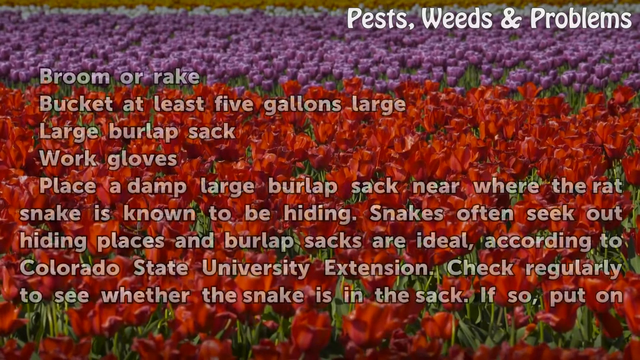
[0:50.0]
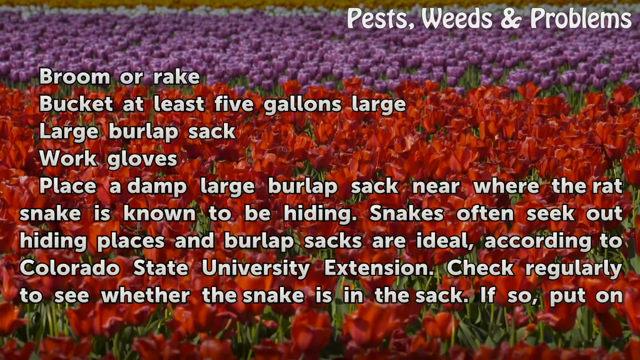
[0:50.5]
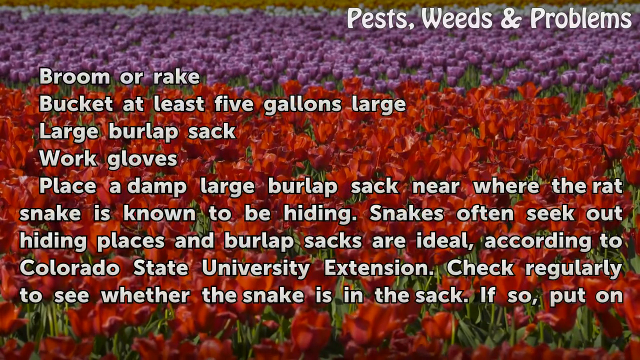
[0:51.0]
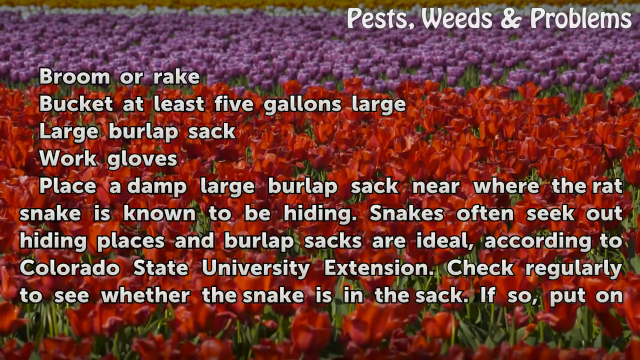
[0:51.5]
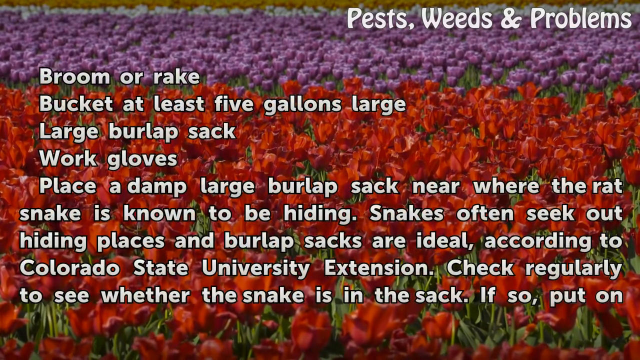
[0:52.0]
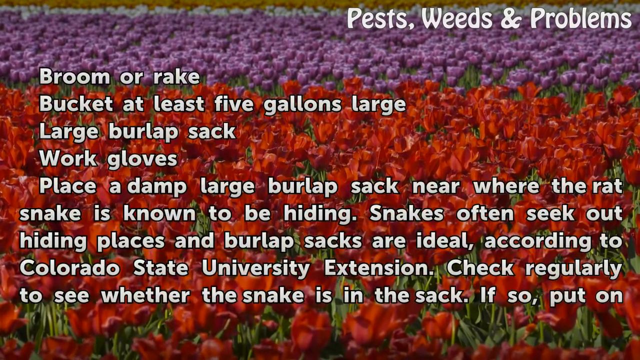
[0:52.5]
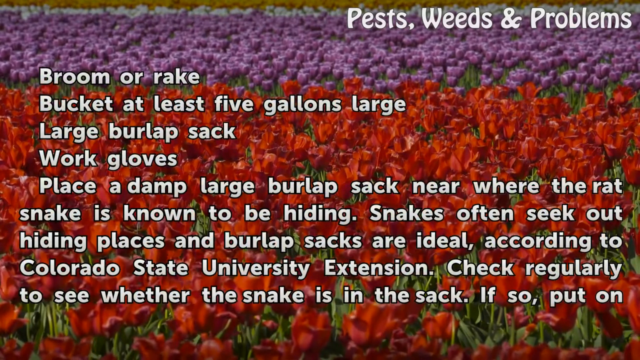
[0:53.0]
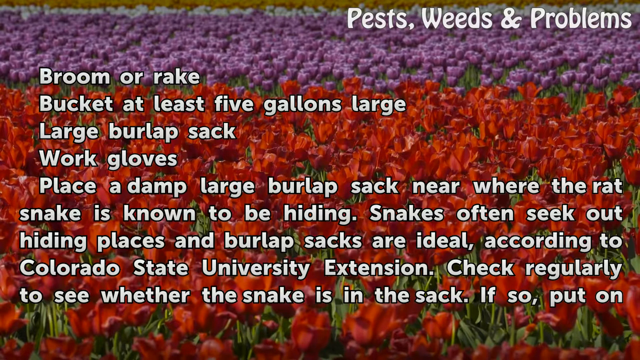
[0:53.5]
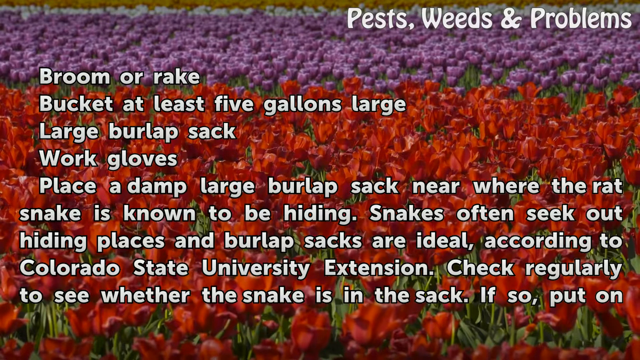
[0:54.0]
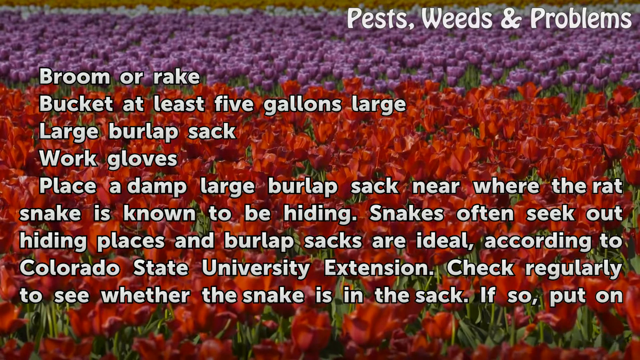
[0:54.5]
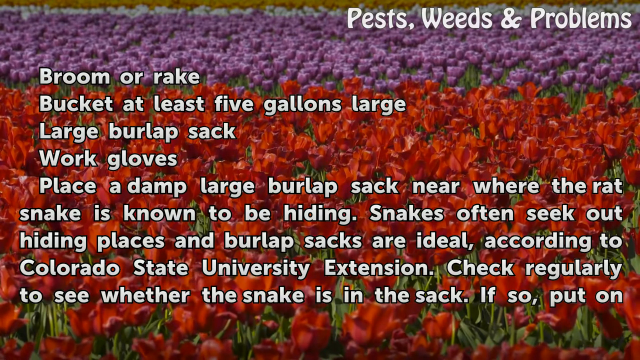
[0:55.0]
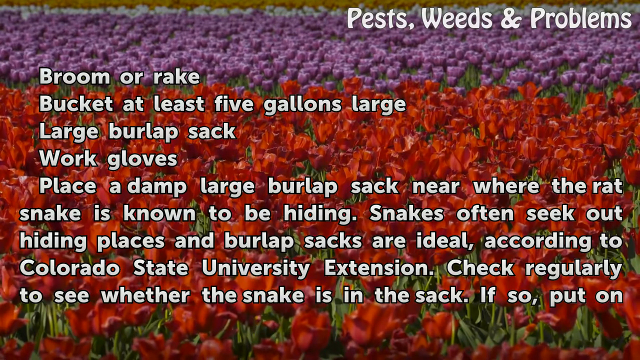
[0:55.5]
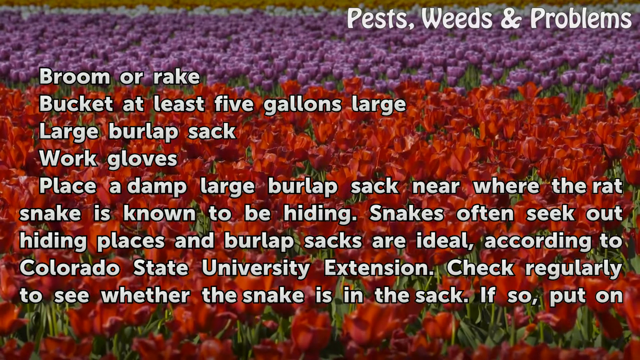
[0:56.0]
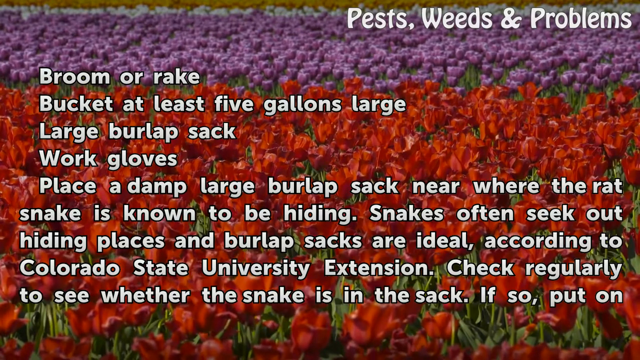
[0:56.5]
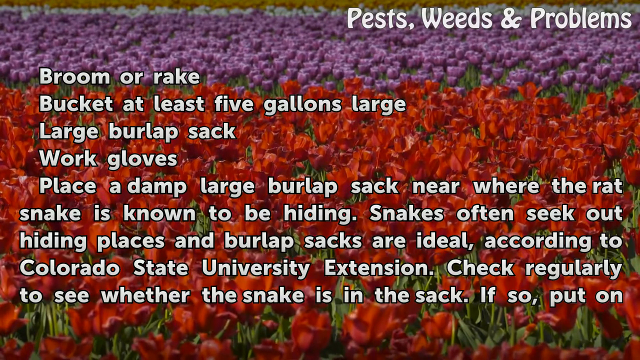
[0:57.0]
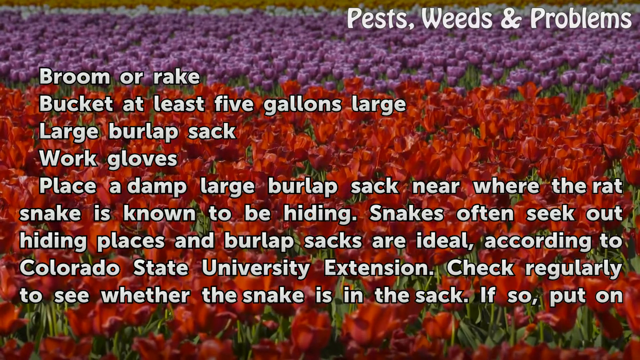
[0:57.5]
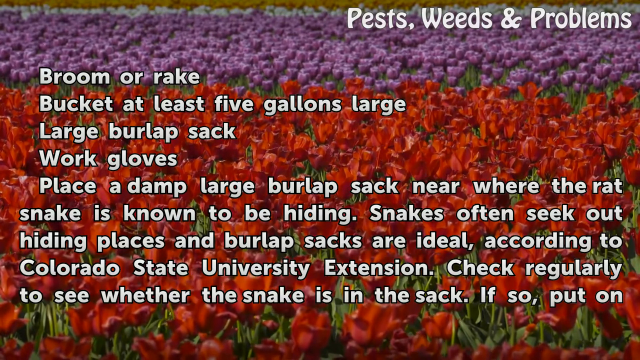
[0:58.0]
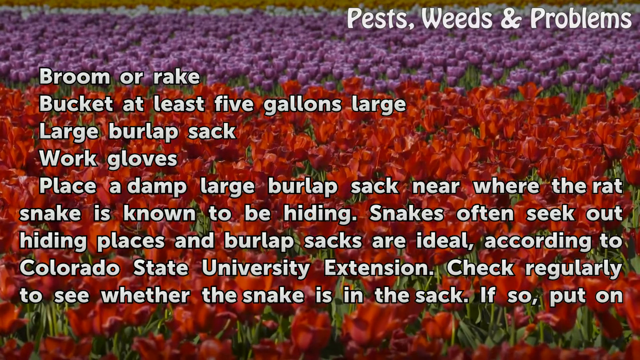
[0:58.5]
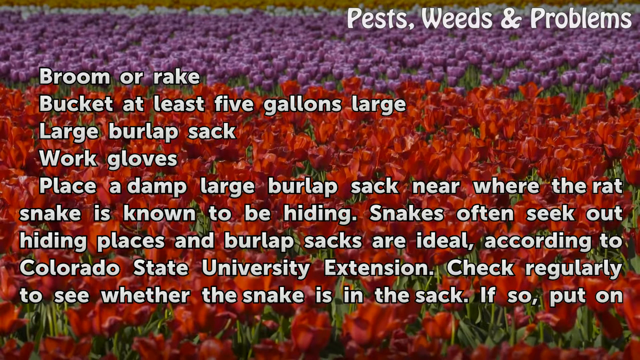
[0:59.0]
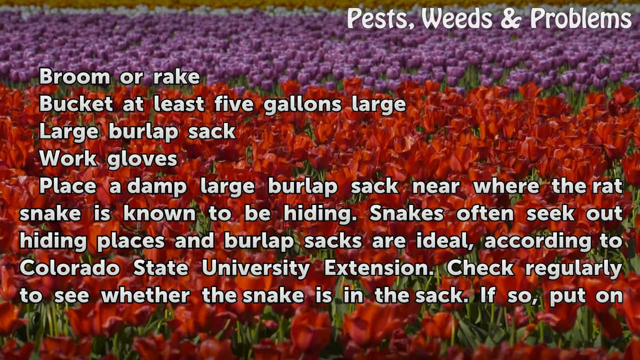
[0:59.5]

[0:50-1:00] White lettering at the top right says "pest weeds and problems." White lettering in the middle reads "broom or rake. Bucket at least five gallons large. Large burlap sack. Work gloves. Place a damp large burlap sack near where the rat snake is known to be hiding. Snakes often seek out hiding places and burlap sacks are ideal according to Colorado State University Extension. Check regularly to see whether the snake is in the sack. If so, put on." In the background are orange flowers in the far distance, then a row of white and a row of purple, with green stems visible underneath and a last row of red flowers all bunched together.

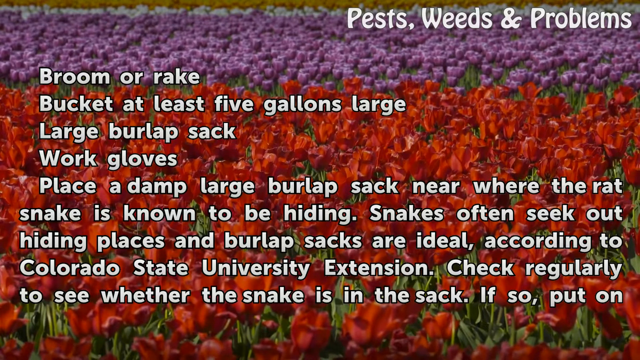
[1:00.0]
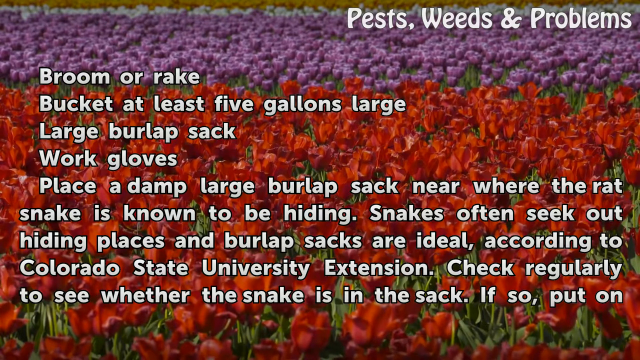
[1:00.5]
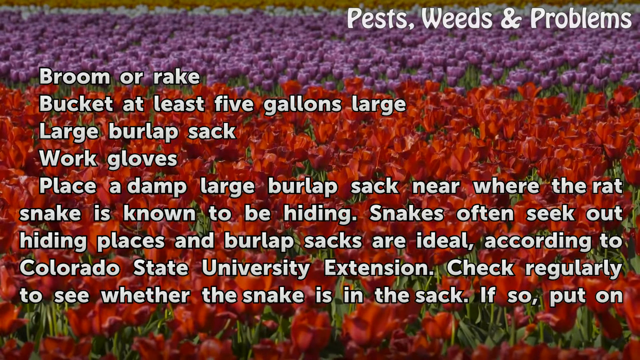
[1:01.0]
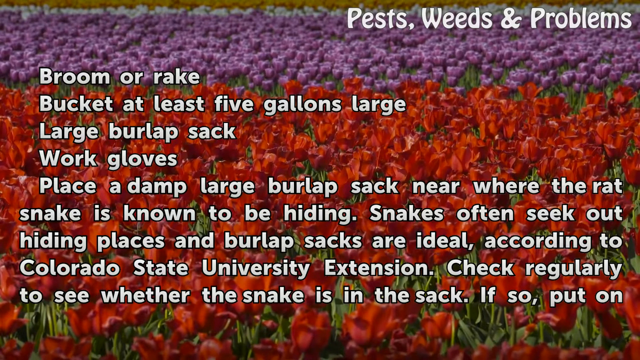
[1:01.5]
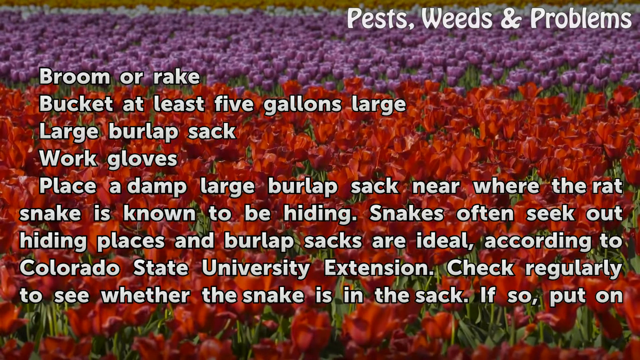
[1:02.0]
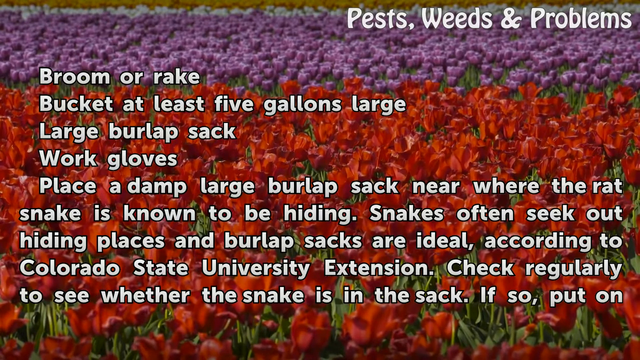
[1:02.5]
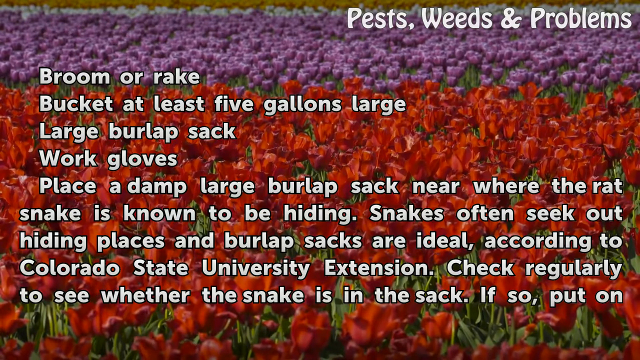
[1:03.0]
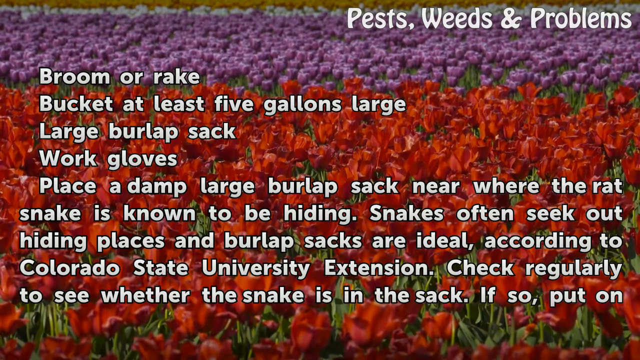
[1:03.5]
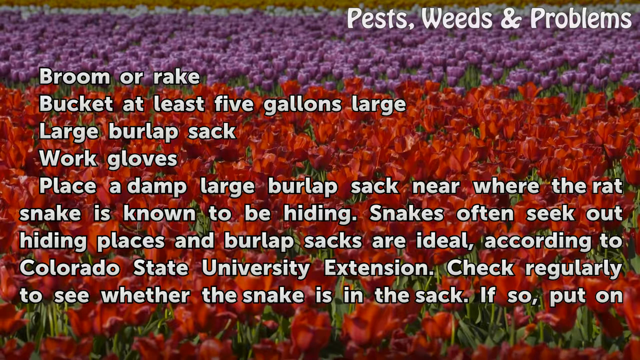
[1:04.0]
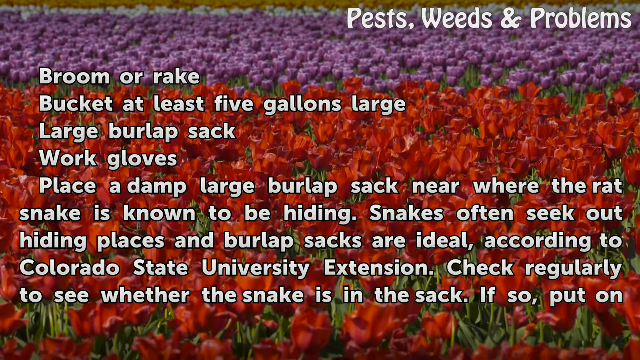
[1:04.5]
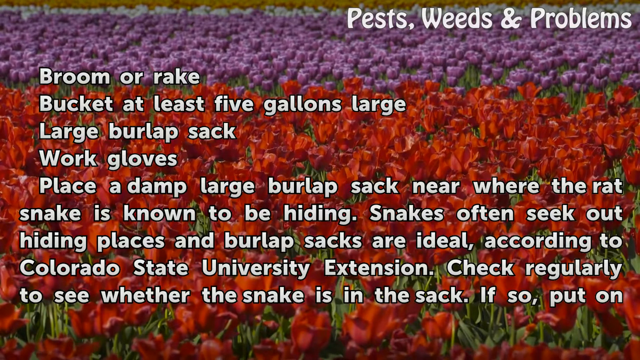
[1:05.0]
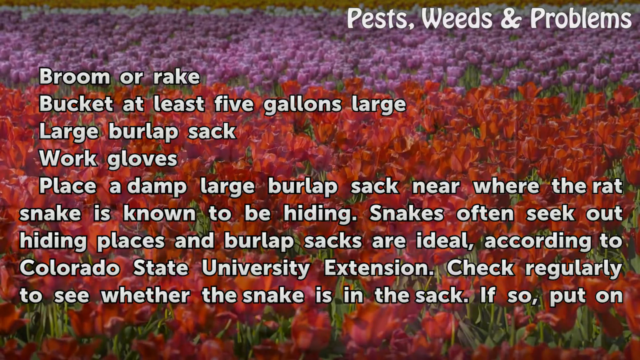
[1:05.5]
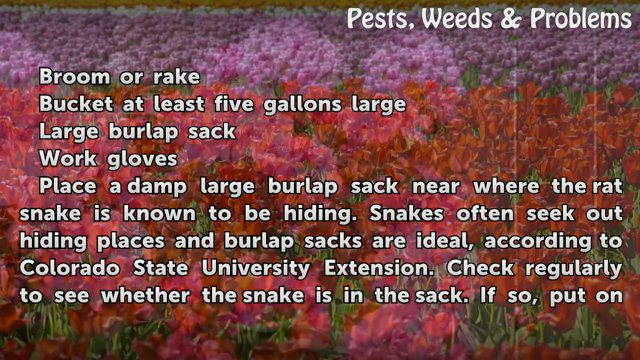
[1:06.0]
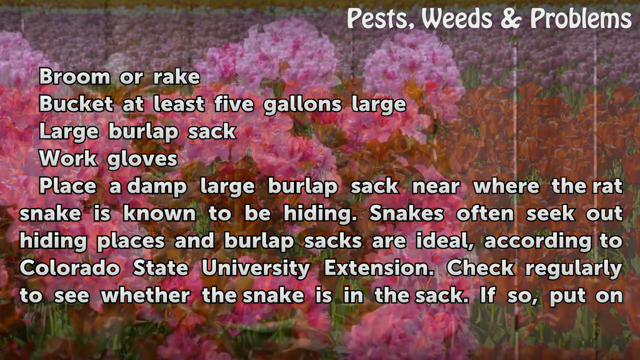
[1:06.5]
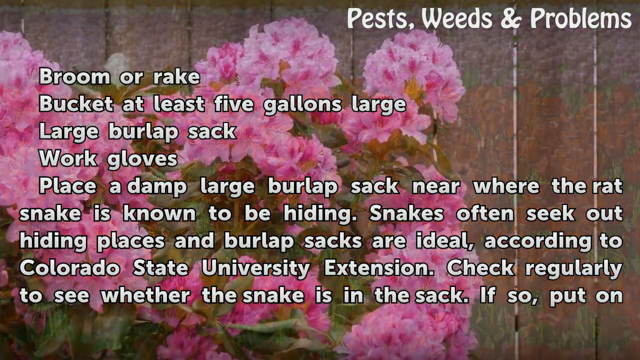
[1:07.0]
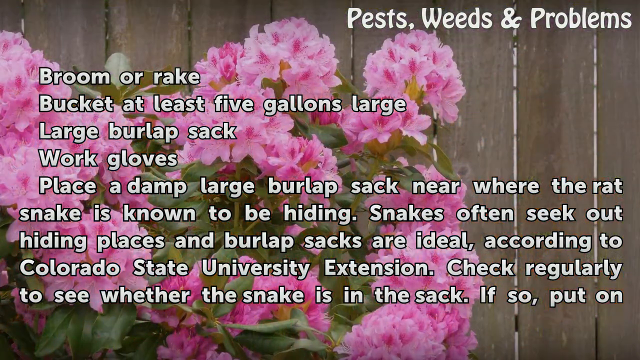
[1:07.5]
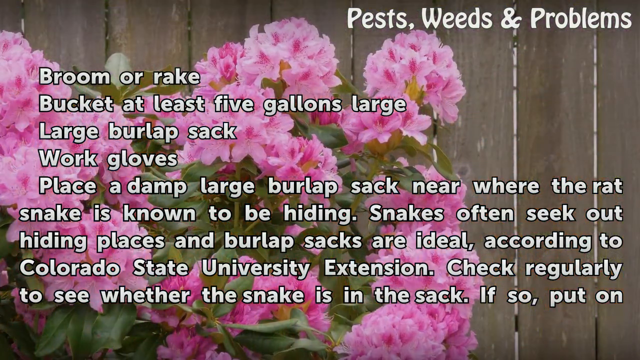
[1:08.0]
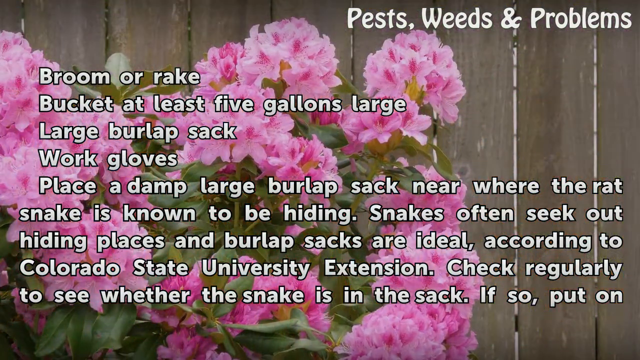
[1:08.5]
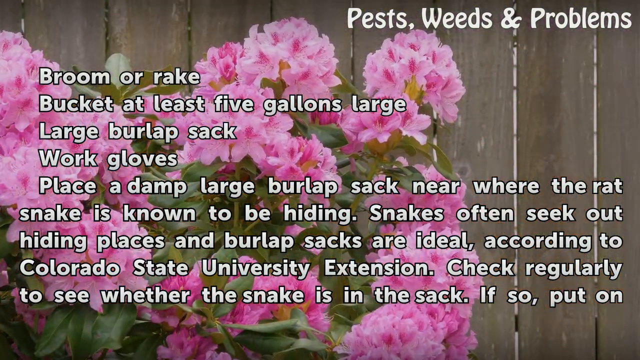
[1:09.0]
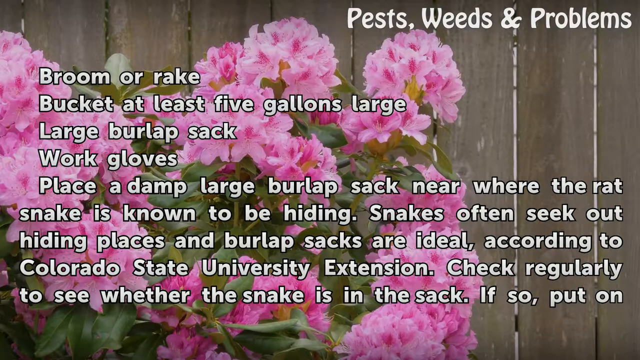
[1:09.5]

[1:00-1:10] White lettering at the top right reads "pests, weeds, and problems." Text running downward in the center reads "broom or rake, bucket at least five gallons large, large burlap sack, work gloves, place a damp large burlap sack near where the rat snake is known to be hiding. Snakes often seek out hiding places and burlap sacks are ideal according to Colorado State University extension. Check regularly to see whether the snake is in the sack. If so, put on." In the distance are orange flowers, then a row of white and a row of purple, with green stems visible underneath and a final row of red flowers.